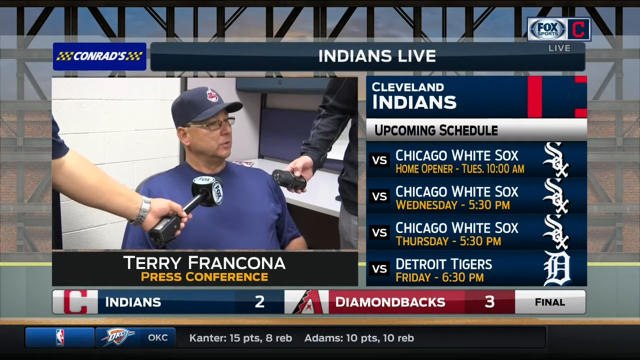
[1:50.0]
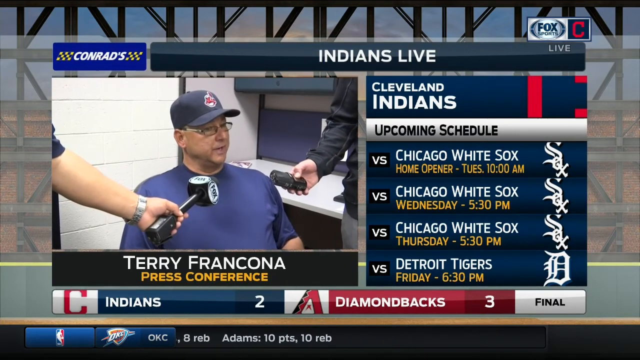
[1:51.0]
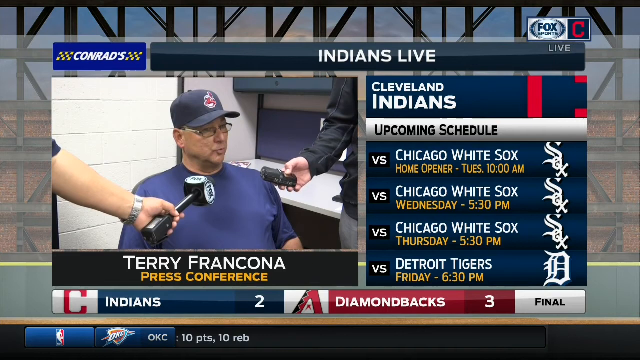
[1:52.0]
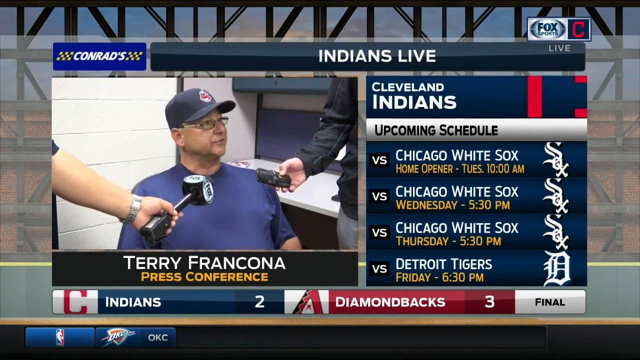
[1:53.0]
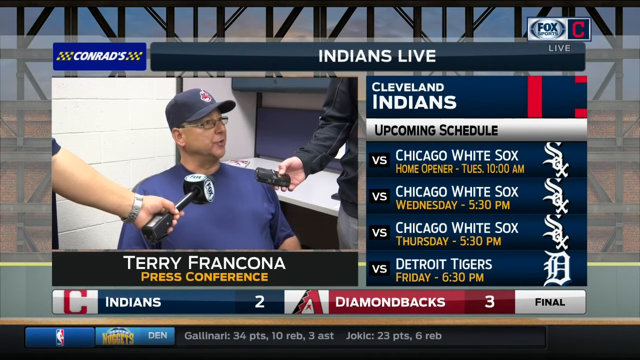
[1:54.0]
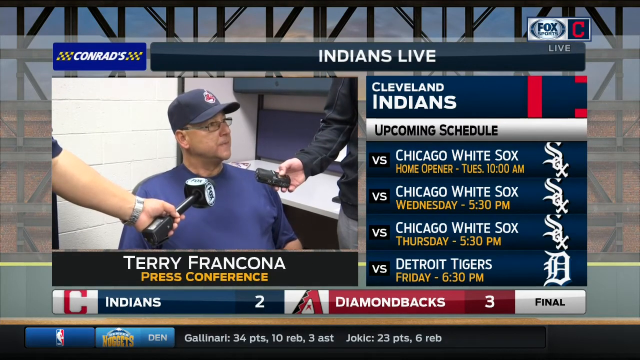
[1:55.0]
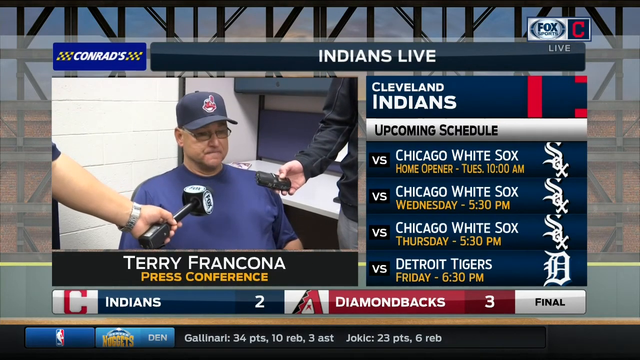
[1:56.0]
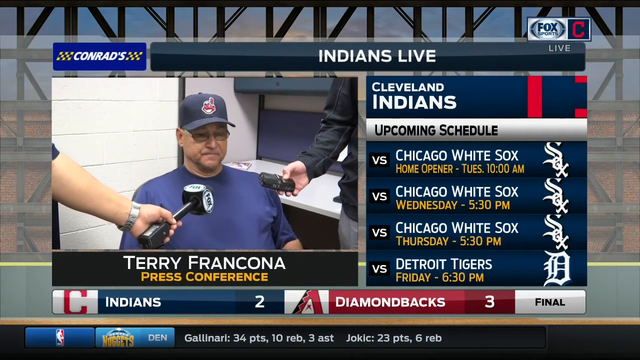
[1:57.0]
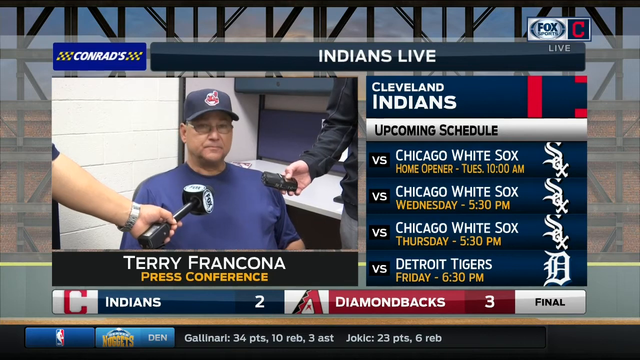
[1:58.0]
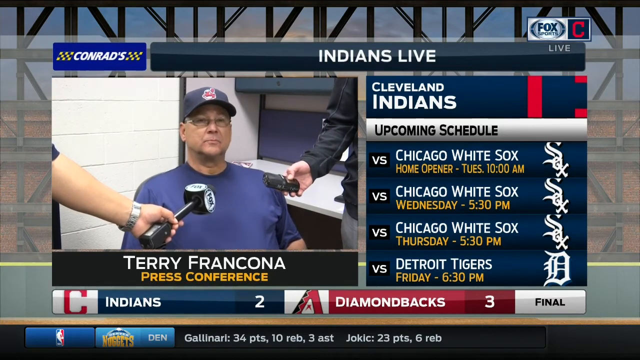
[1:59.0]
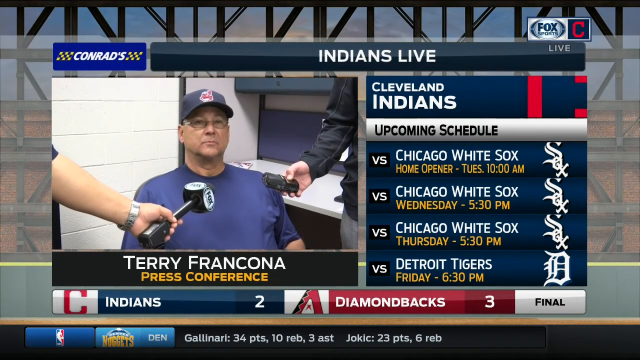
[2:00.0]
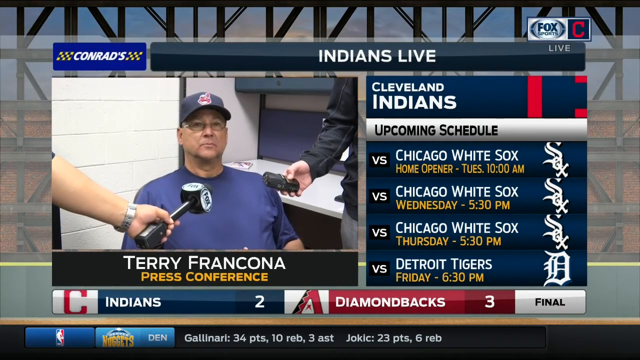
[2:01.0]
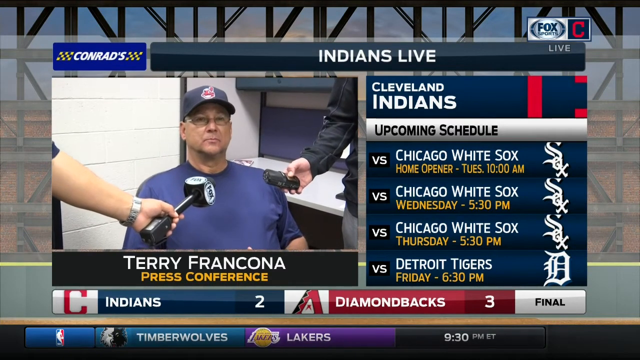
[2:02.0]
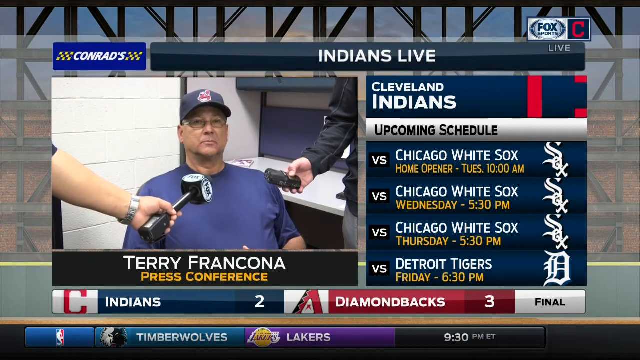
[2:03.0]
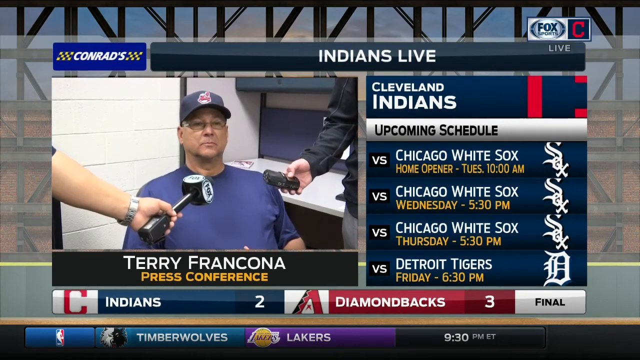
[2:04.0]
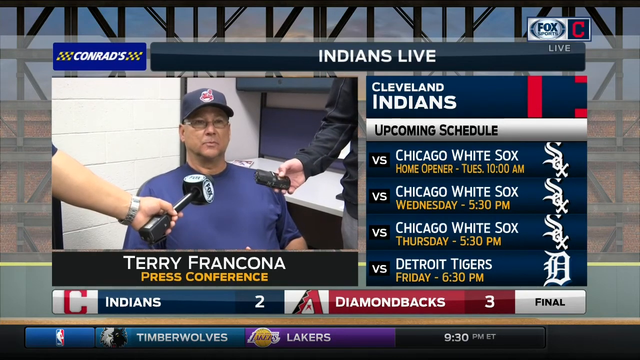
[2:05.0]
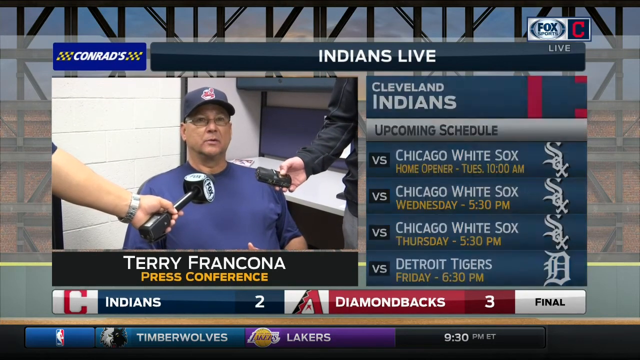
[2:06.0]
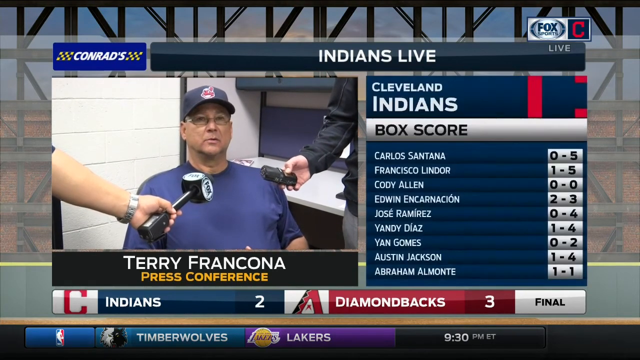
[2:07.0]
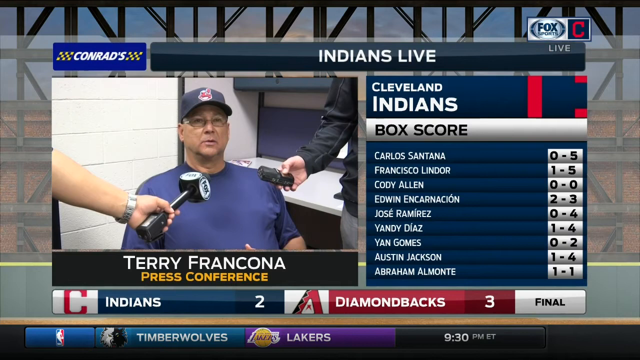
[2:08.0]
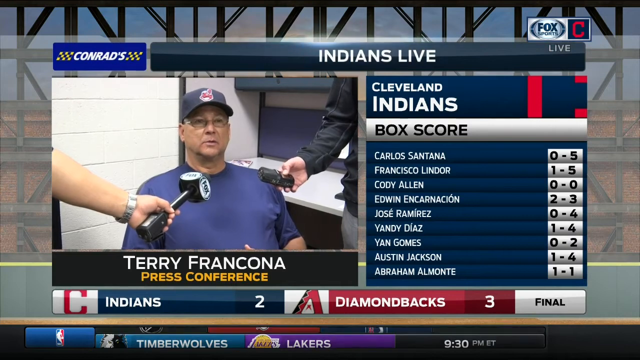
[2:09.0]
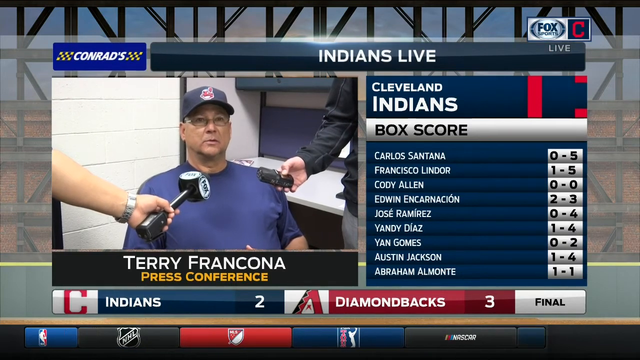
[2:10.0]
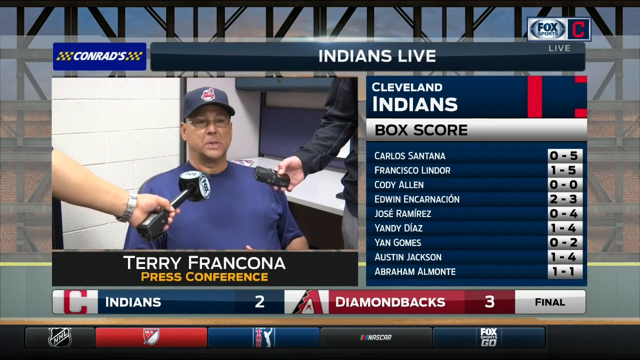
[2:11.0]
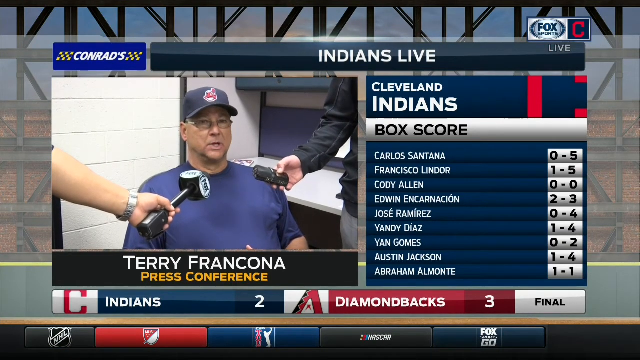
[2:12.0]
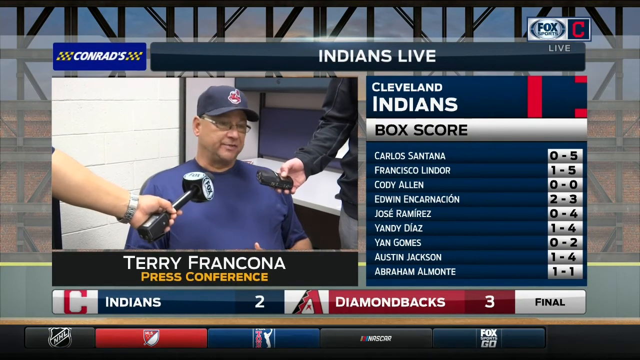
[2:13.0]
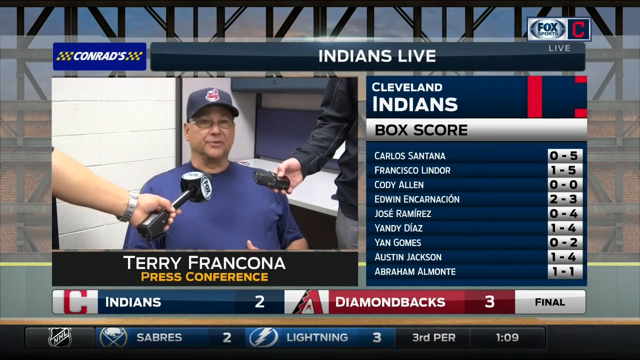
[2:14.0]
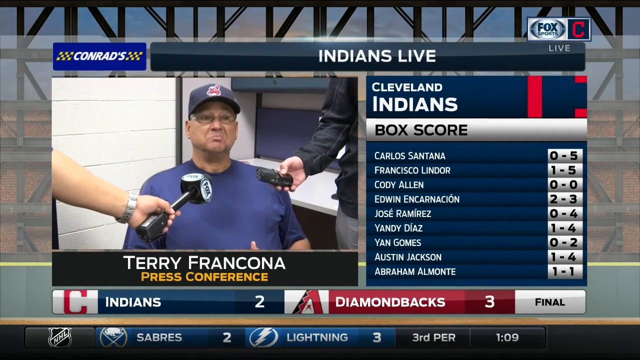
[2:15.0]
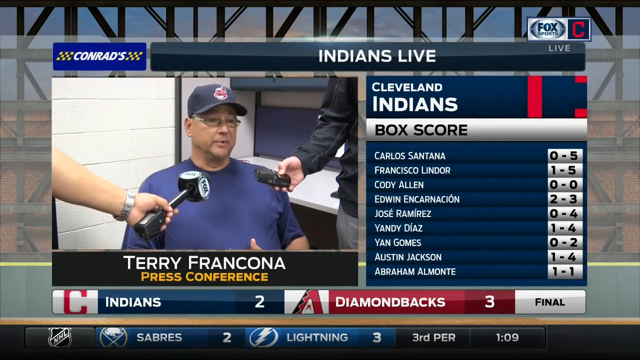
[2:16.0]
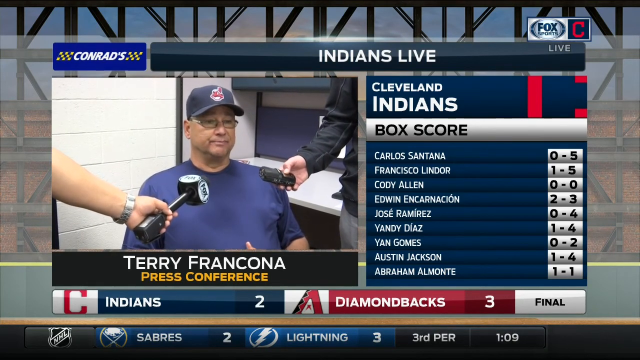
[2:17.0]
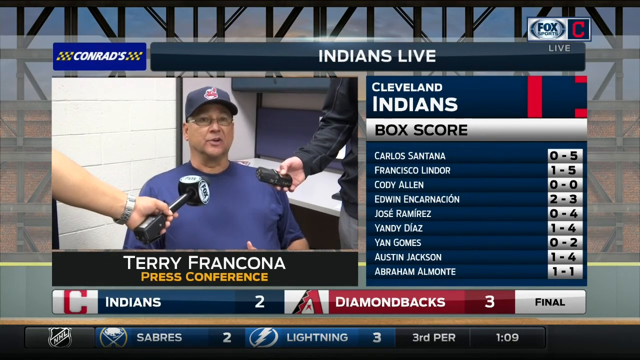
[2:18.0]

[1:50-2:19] At the press conference, Cleveland Indians manager Terry Francona, whose team has just lost 3-2 to the Arizona Diamondbacks, sits in a chair and keeps talking while reporters stand on either side of him. One holds a microphone about the size of a five-pound weight and the other a microphone about the size of a computer mouse, both about six inches from his mouth. Francona looks straight ahead, so possibly another reporter is asking a question. He appears to answer, shaking his head no. The Cleveland Indians' box score is shown again, with six hits. Francona keeps talking; he wears glasses and a Cleveland Indians hat.